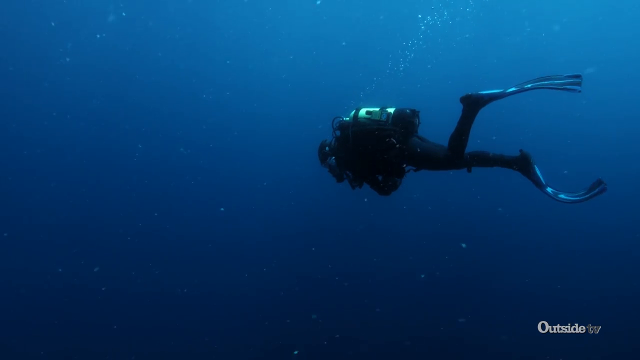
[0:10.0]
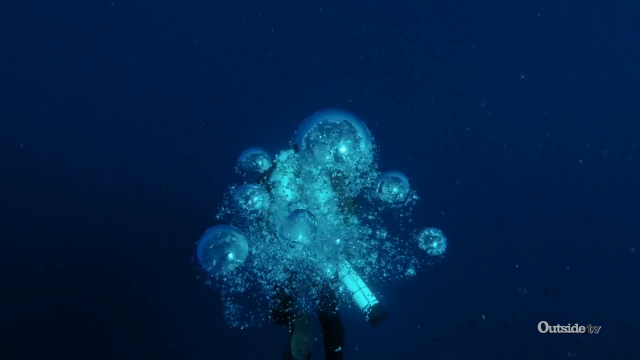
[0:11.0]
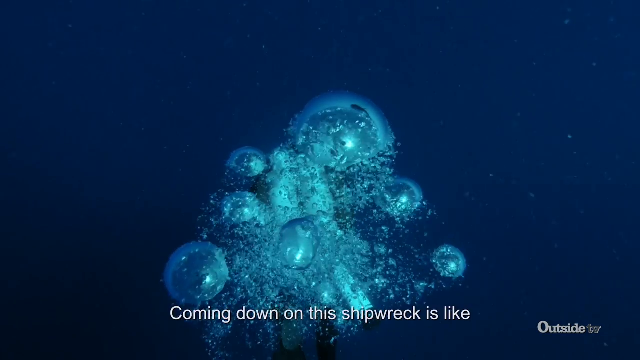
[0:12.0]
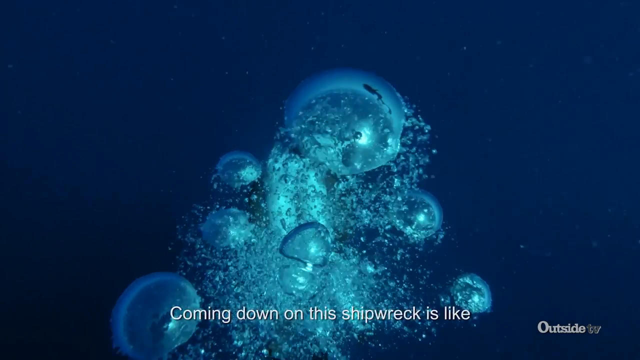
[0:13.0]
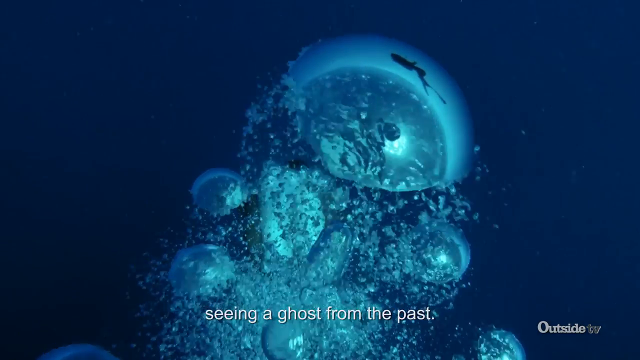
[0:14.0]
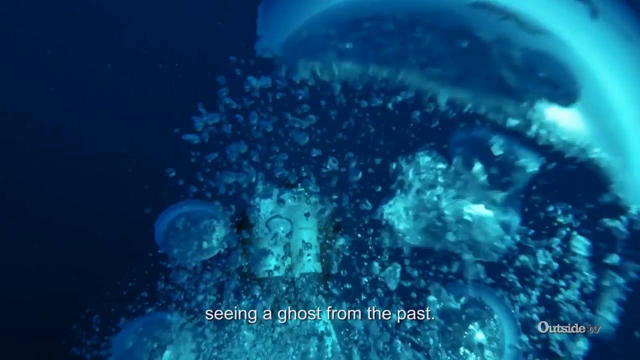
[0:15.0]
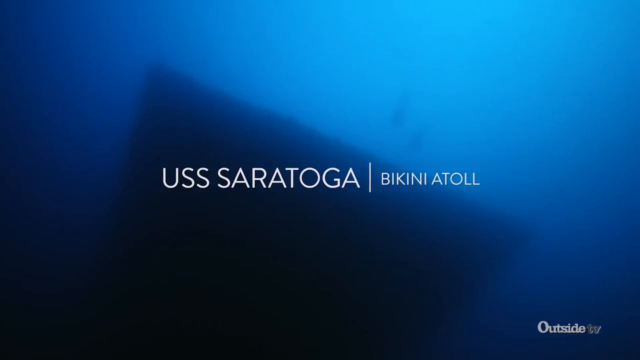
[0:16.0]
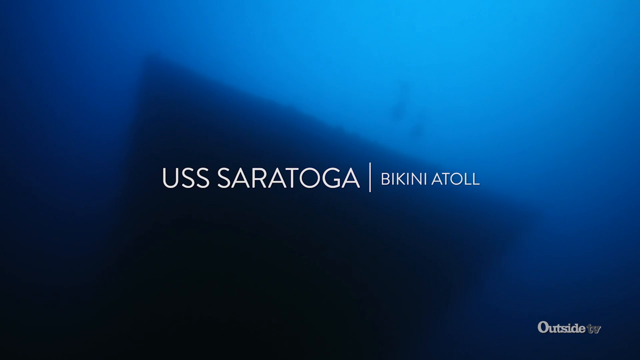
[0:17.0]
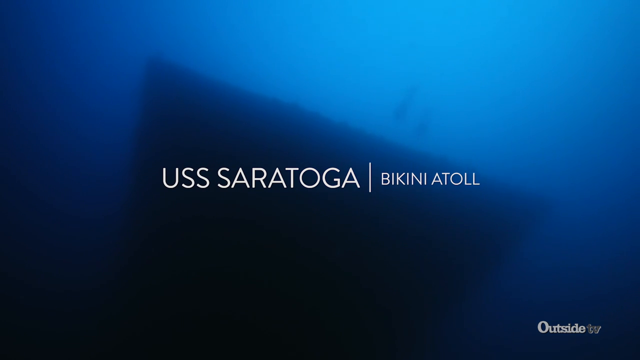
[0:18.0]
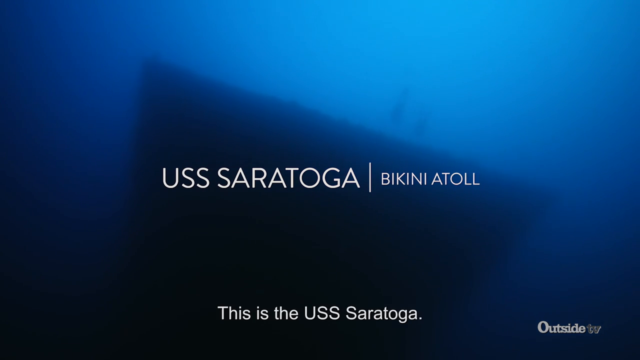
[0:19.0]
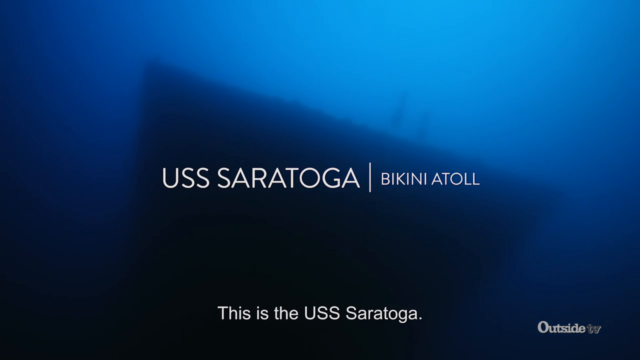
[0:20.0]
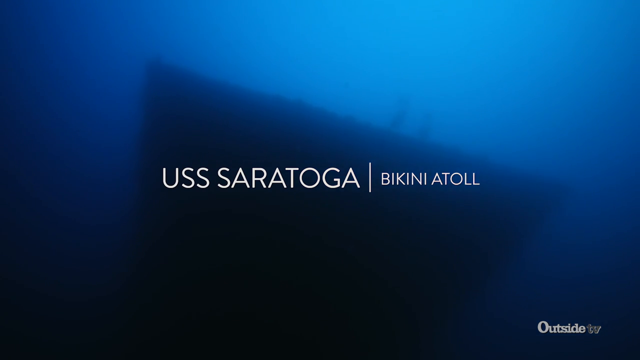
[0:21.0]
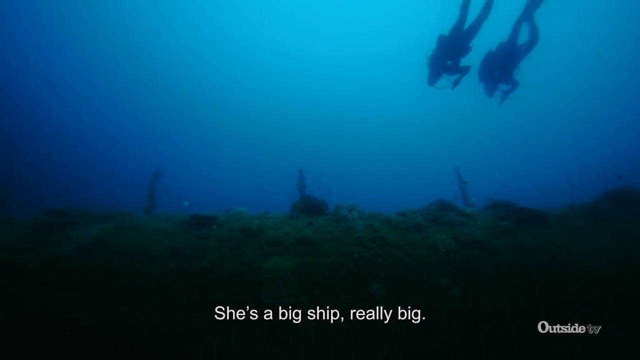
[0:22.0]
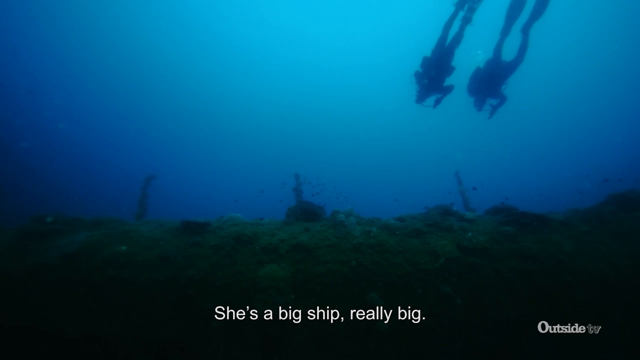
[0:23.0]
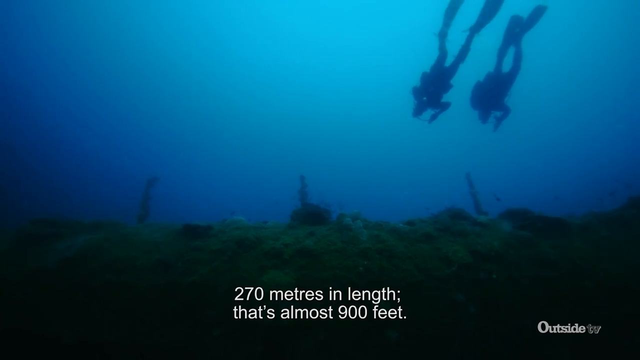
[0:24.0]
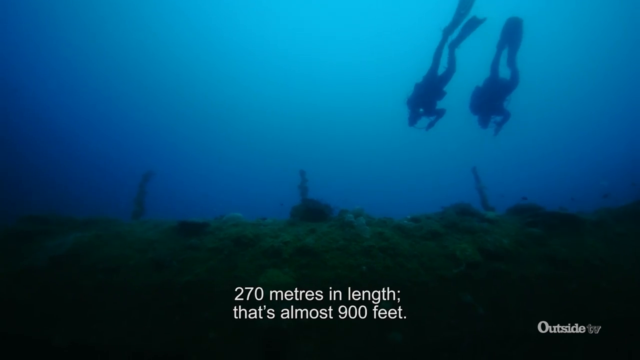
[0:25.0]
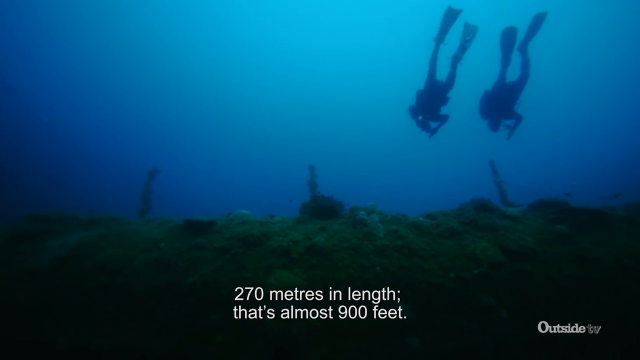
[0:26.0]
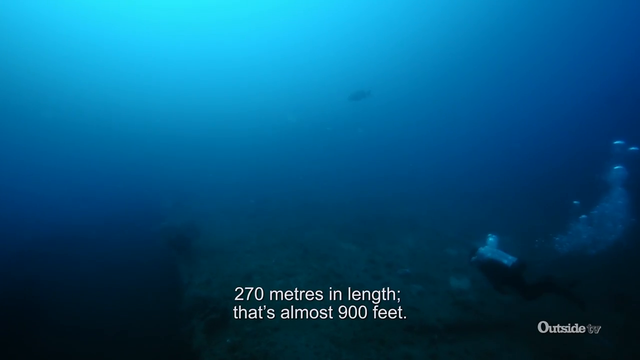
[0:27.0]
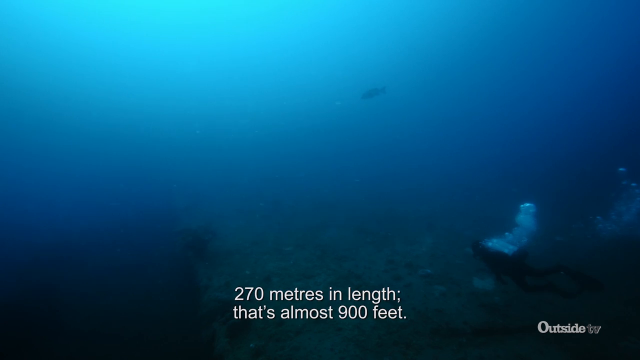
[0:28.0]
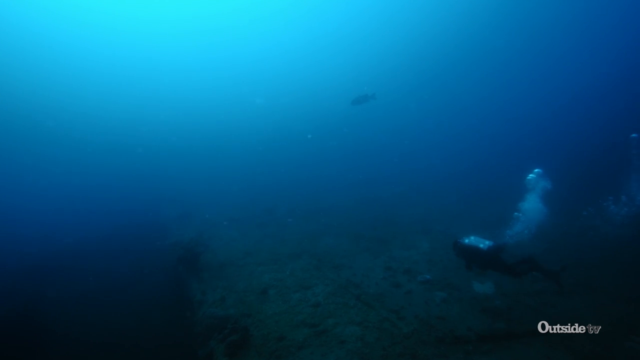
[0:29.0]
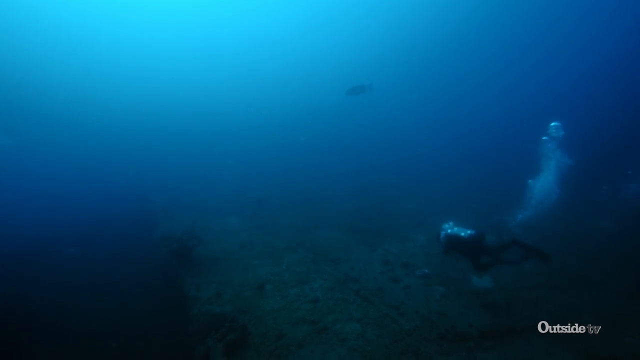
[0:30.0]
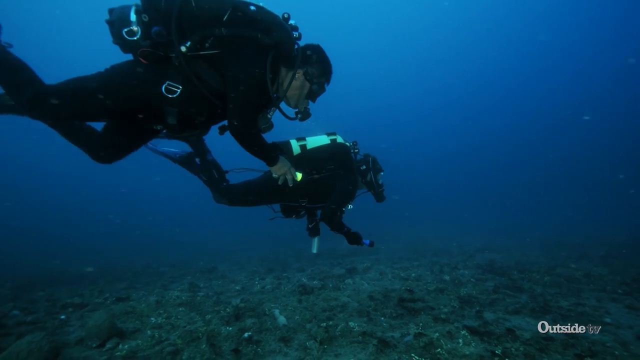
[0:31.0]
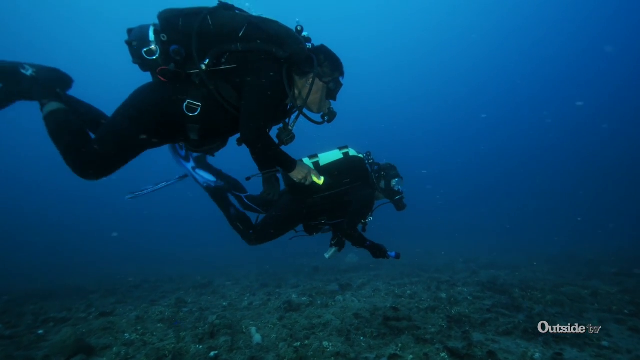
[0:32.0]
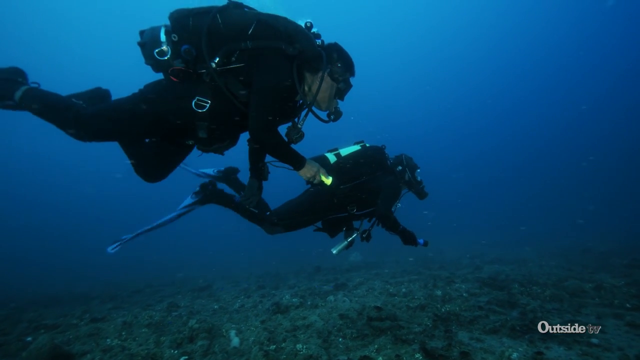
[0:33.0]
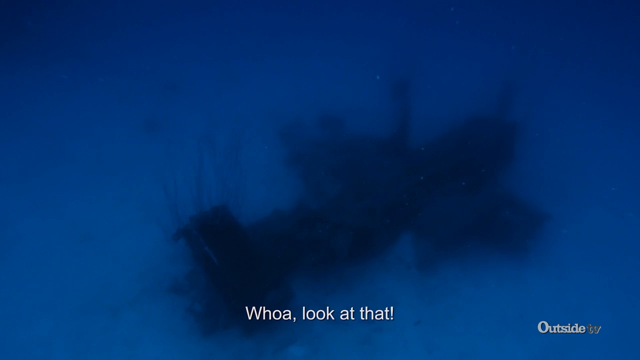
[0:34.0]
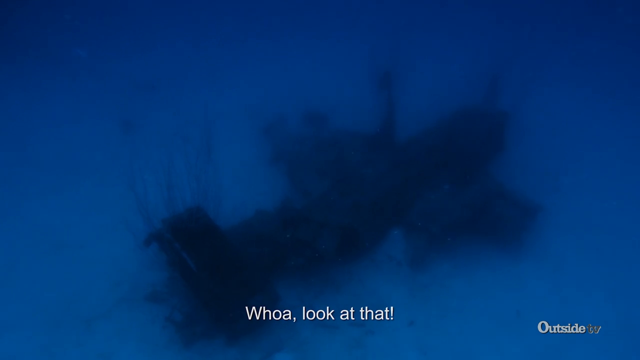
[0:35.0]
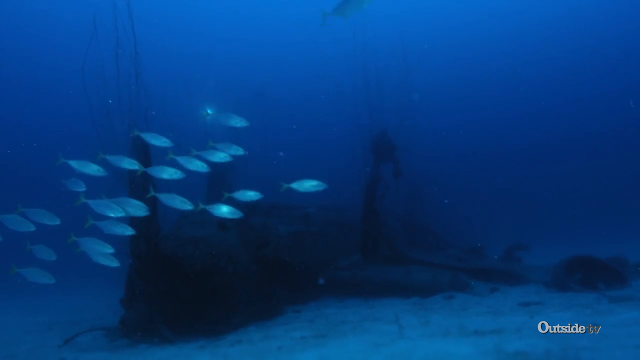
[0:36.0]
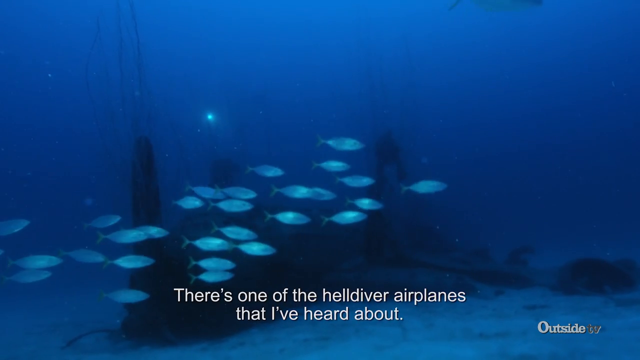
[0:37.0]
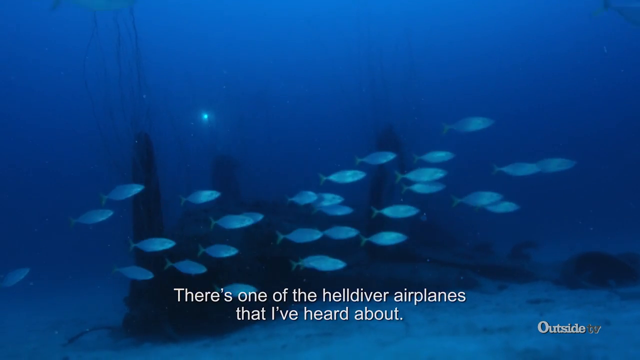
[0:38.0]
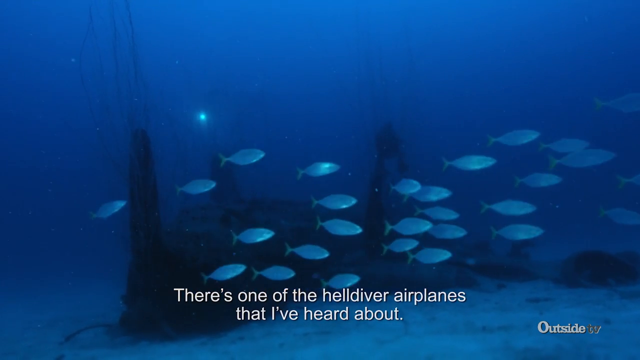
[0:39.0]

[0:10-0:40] A person in full scuba gear, with an oxygen tank on their back and flippers on their feet, swims in a vast space of water. The shot cuts to a number of bubbles with white text reading "Coming down on this shipwreck is like seeing a ghost from the past." A new shot shows white text stating "USS Saratoga Bikini Atoll". White text at the bottom reads "This is the USS Saratoga. She's a big ship, really big." while two divers are in the background. The text changes to "270 meters in length; that's almost 900 feet". A murky image shows the divers continuing to swim with bubbles coming out of their breathing tubes, followed by a closer image of the two divers swimming. A silhouette of an object appears with white text stating "Whoa look at that". Then what appears to be a ship or airplane is shown on the ocean floor, with white text stating "There's one of the helldiver airplanes that I've heard about", as fish swim past.